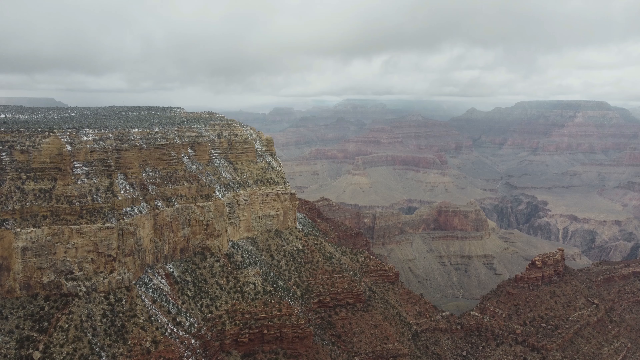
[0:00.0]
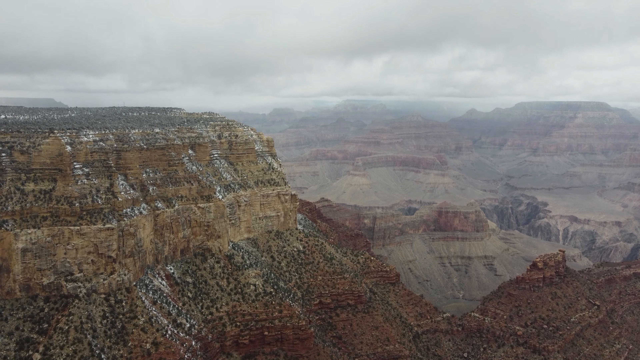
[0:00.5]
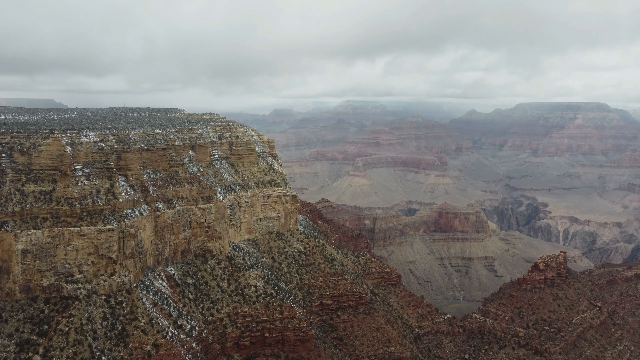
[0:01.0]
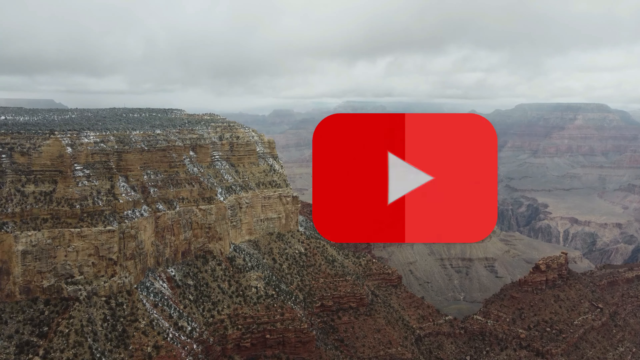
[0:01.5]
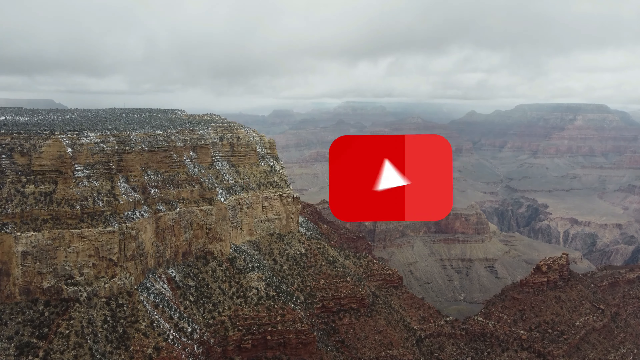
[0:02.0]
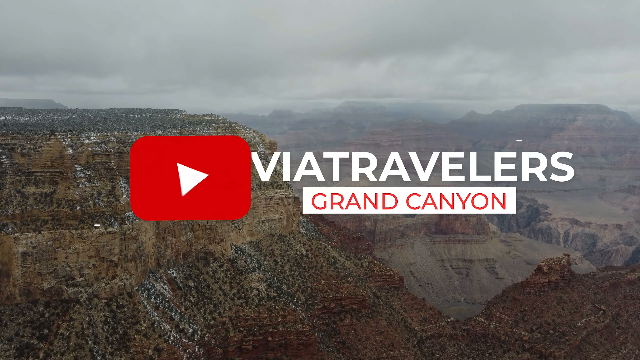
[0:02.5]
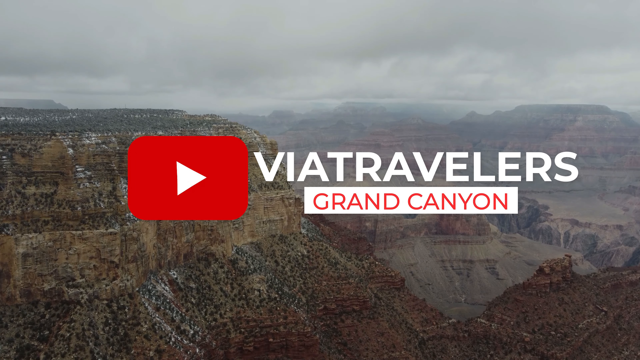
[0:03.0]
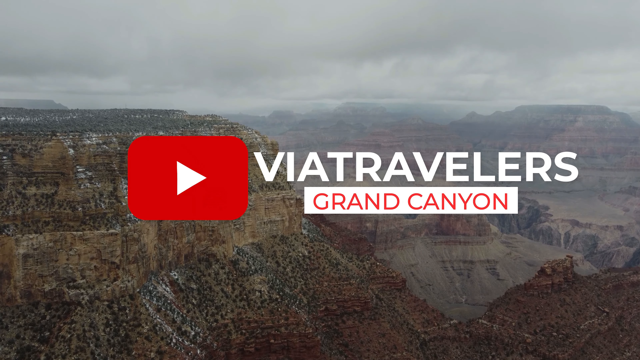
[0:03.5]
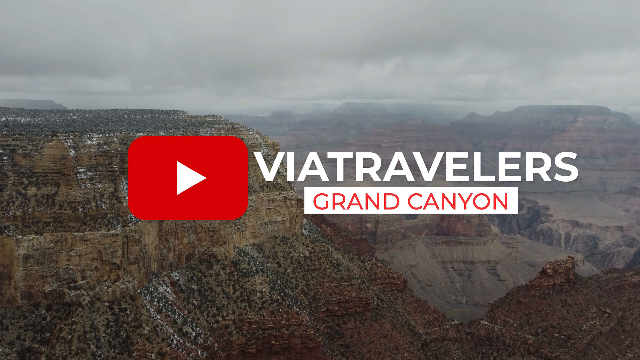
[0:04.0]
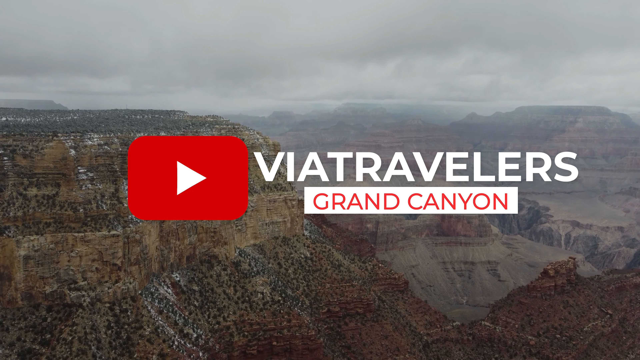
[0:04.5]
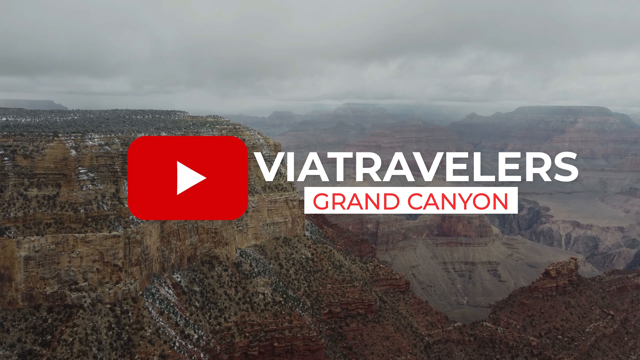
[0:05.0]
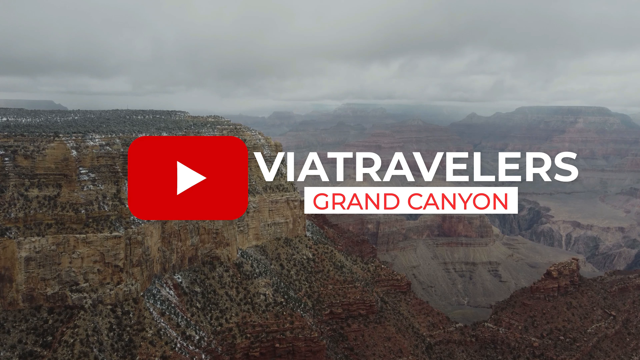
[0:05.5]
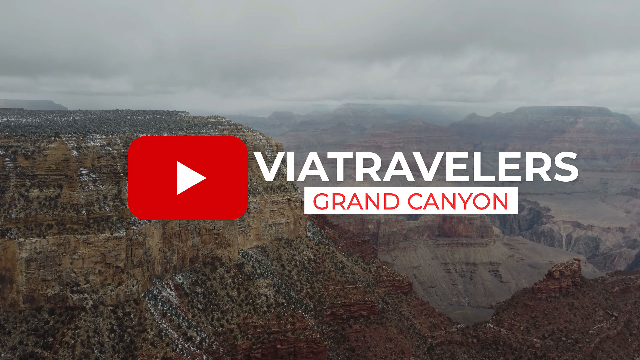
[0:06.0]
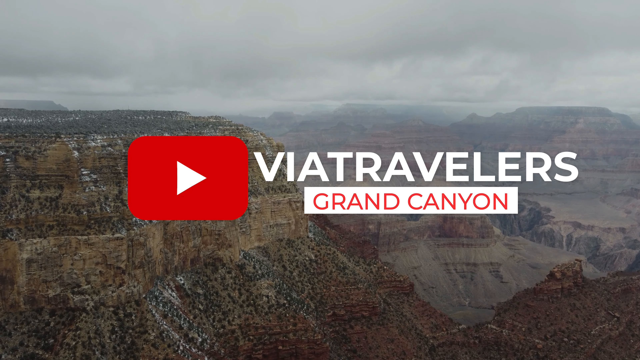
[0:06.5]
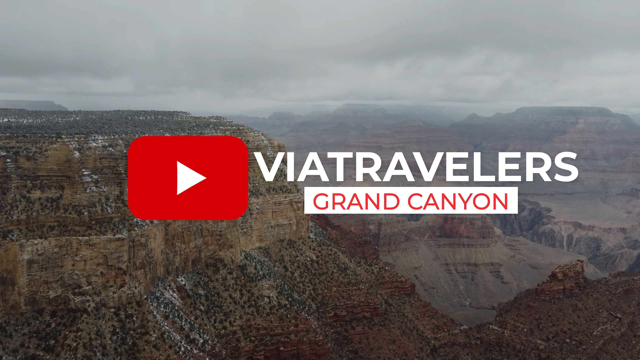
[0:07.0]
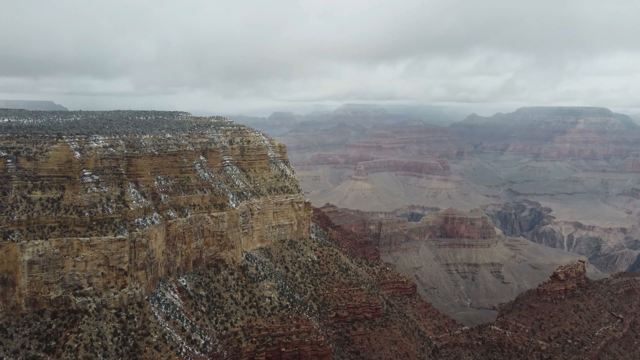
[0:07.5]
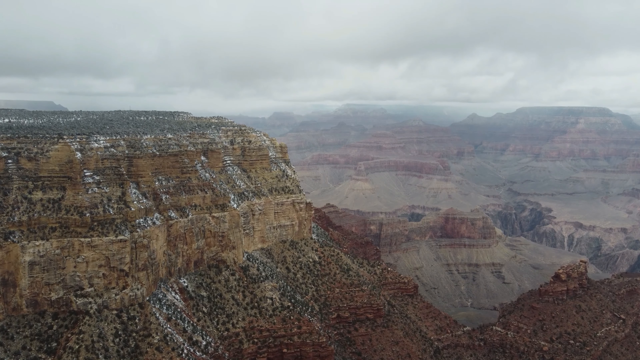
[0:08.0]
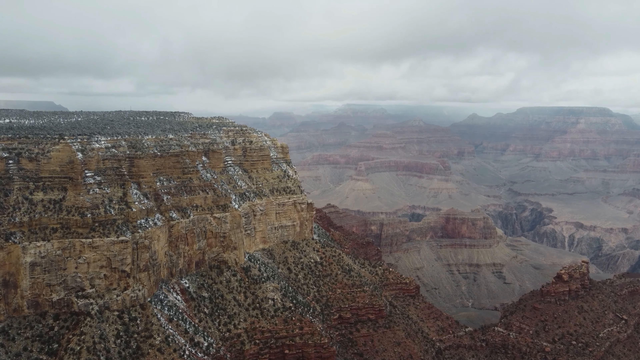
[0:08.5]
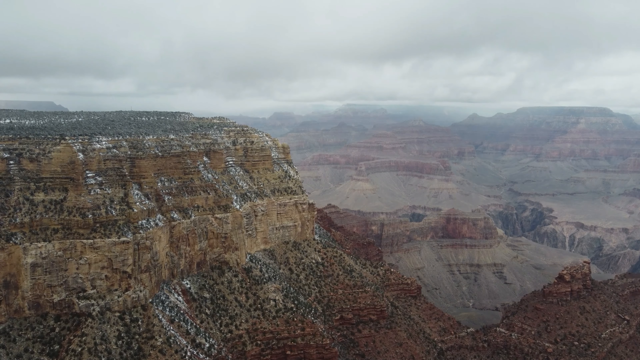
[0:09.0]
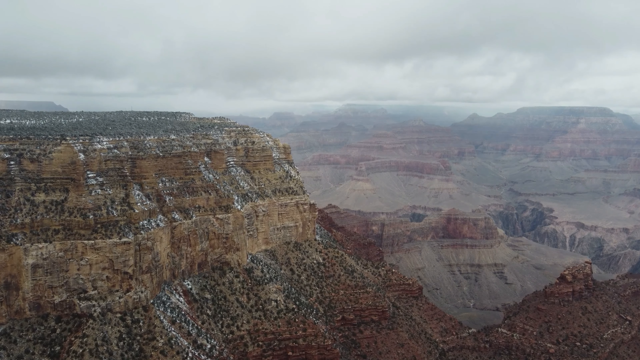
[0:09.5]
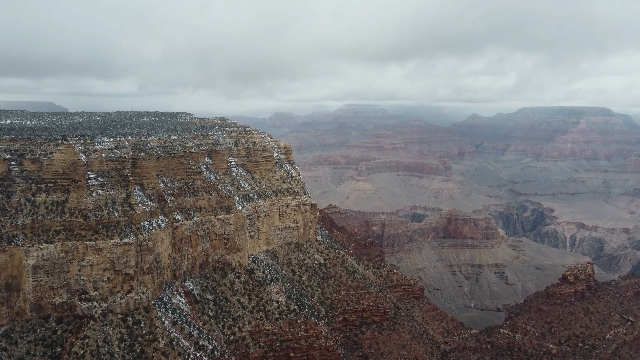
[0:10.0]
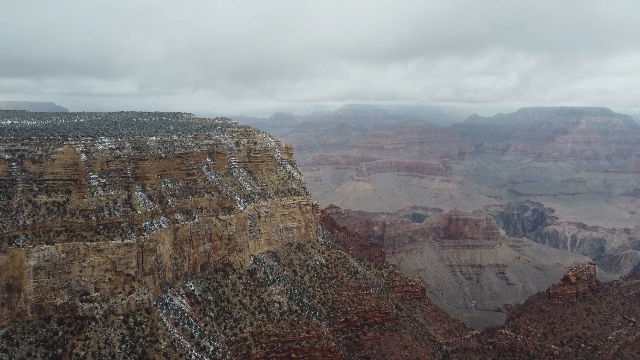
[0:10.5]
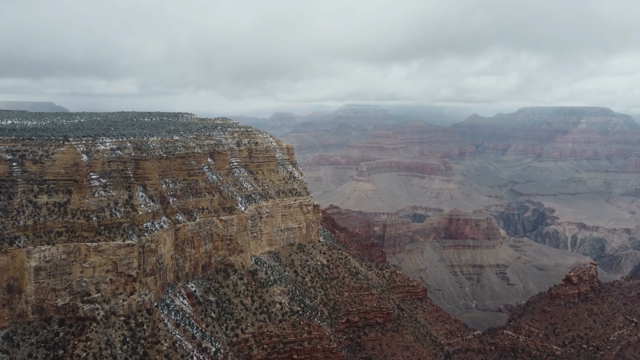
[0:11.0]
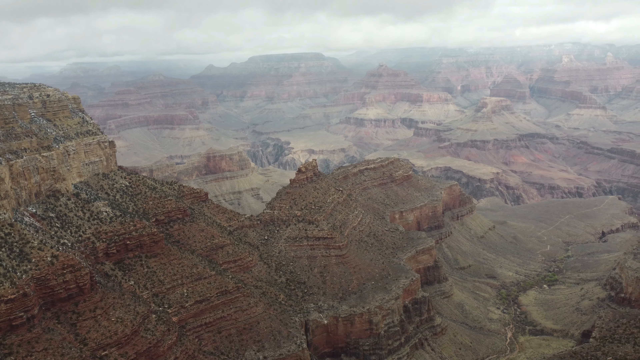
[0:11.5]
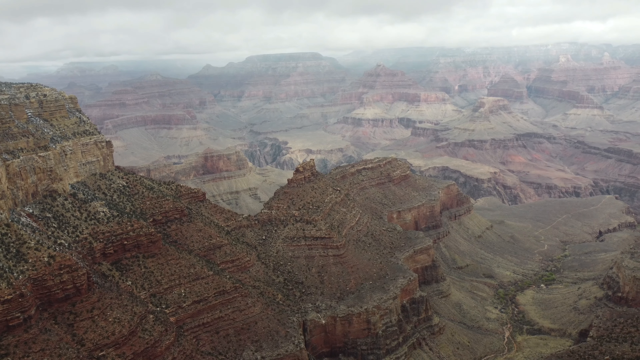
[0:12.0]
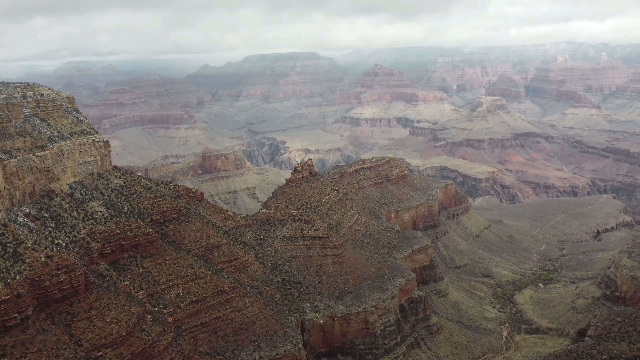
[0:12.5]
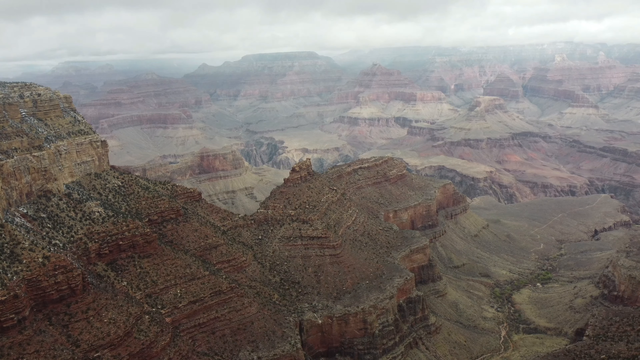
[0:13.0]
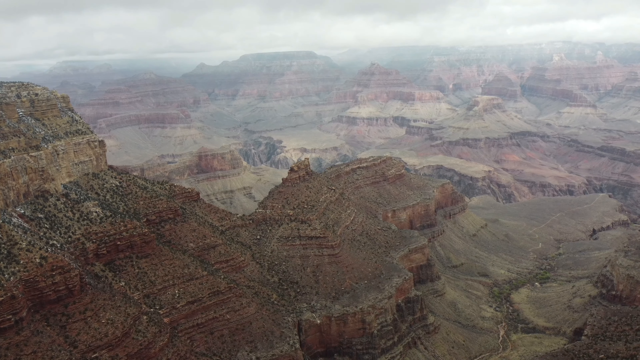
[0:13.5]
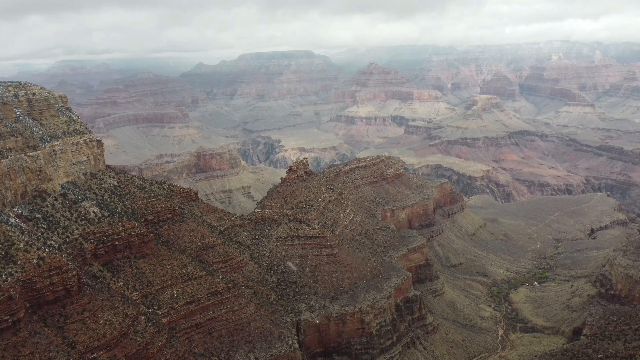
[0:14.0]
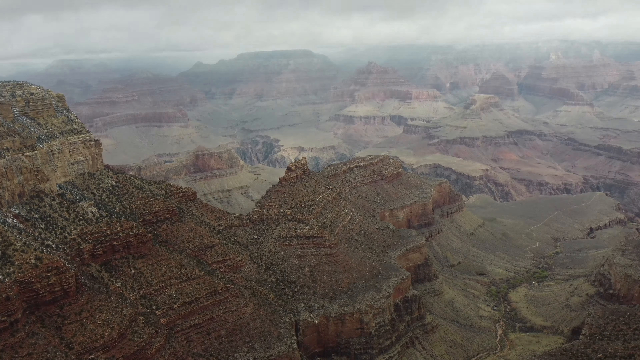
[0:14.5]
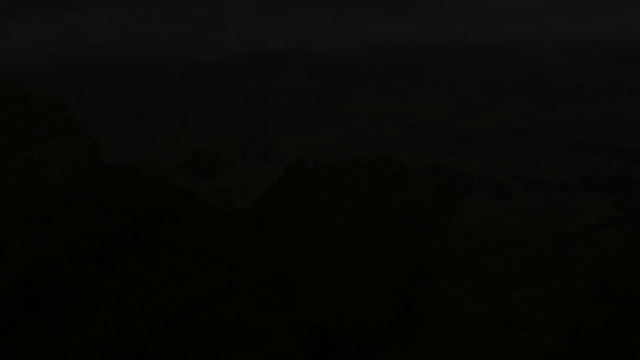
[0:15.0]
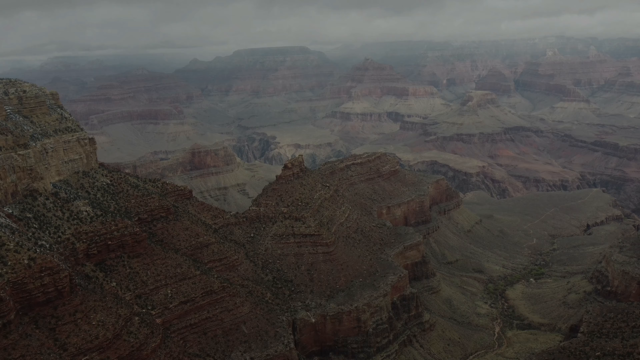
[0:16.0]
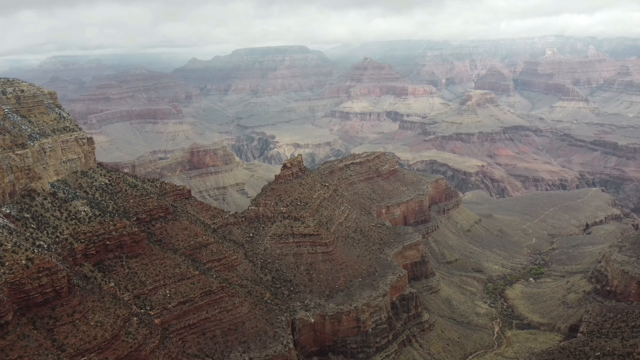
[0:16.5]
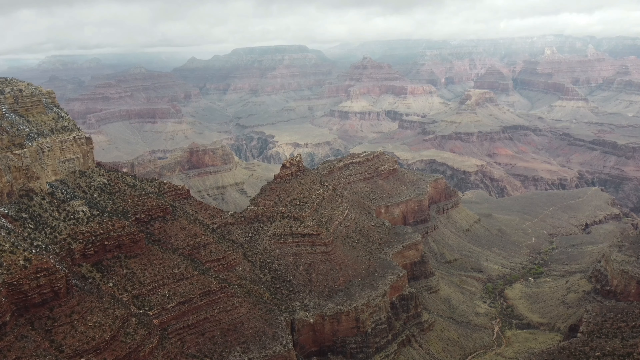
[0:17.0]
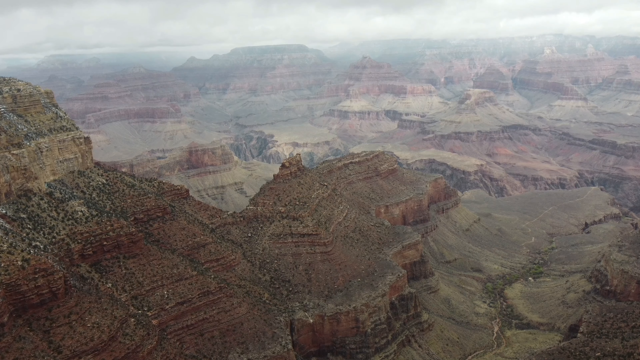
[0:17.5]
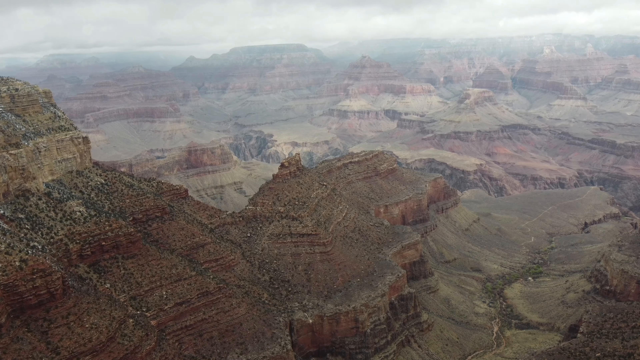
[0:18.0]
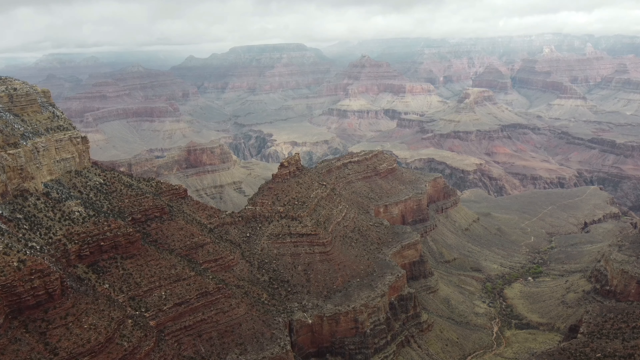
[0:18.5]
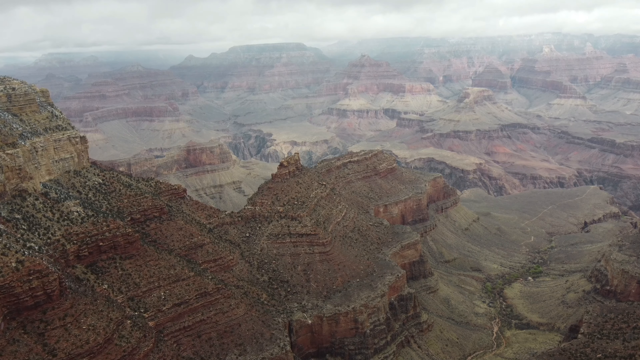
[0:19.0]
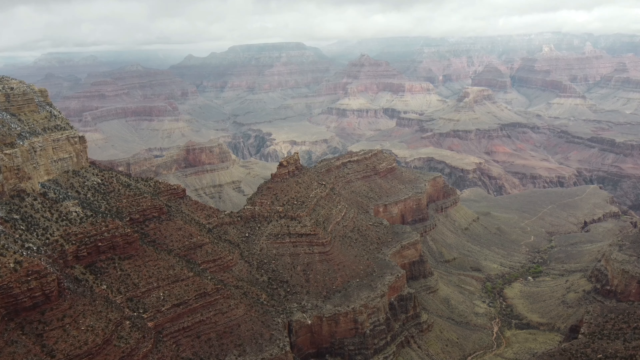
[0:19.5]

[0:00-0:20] A shot shows what looks like a mountain top under very cloudy skies, with clouds surrounding it. Mountain tops and smaller mountains are visible, and the camera moves slightly toward the mountain. A YouTube symbol pops up on screen along with words and a white subtitle. The image behind is of the Grand Canyon in what looks like very cloudy weather. As the camera pans to the left, another image of the Grand Canyon appears. What looks like snow or small white particles moves to the right, pushed by wind. The camera moves forward with the white particles on screen.